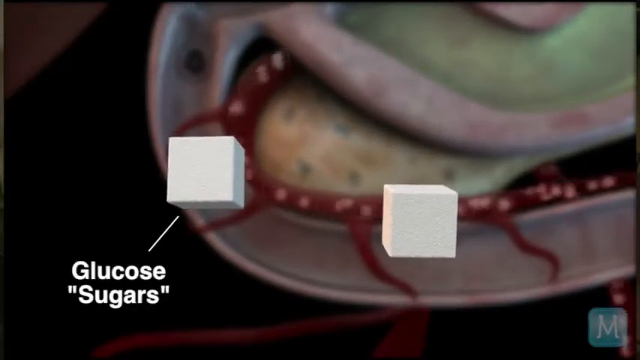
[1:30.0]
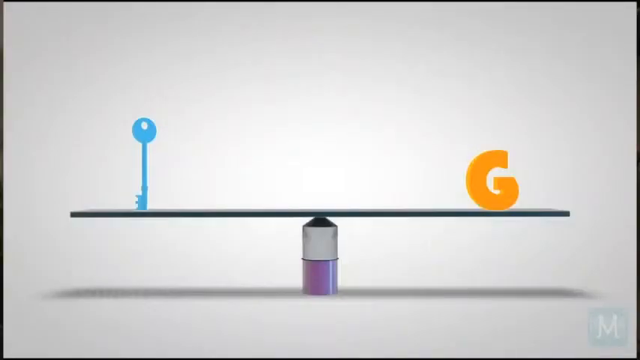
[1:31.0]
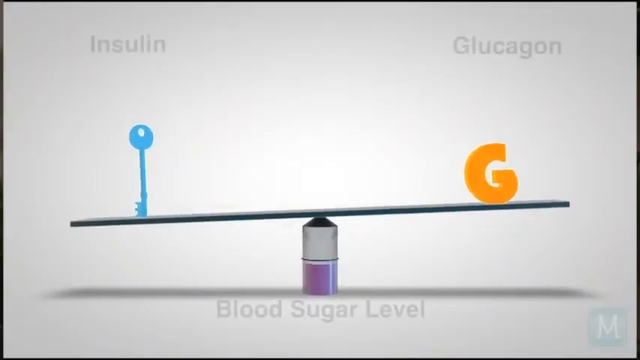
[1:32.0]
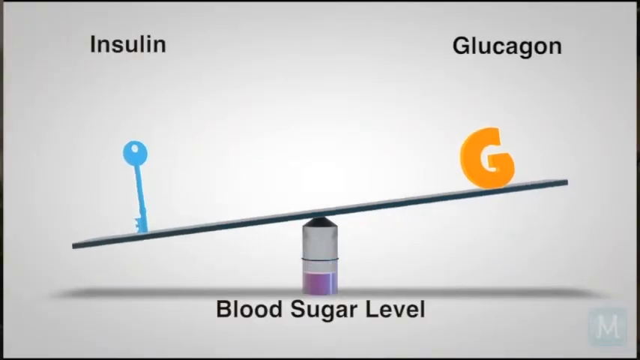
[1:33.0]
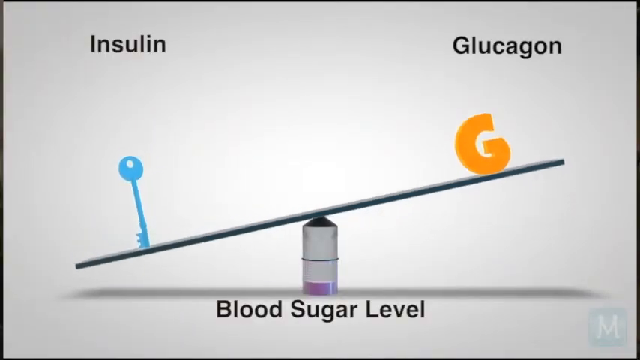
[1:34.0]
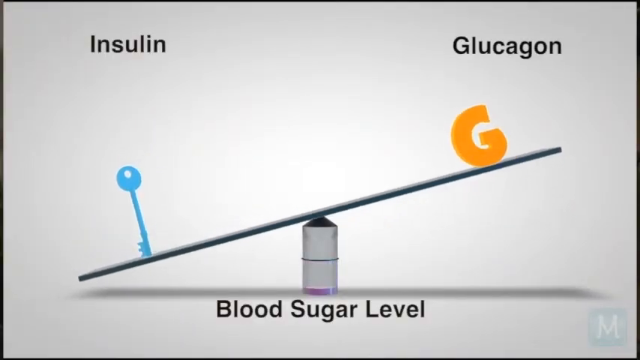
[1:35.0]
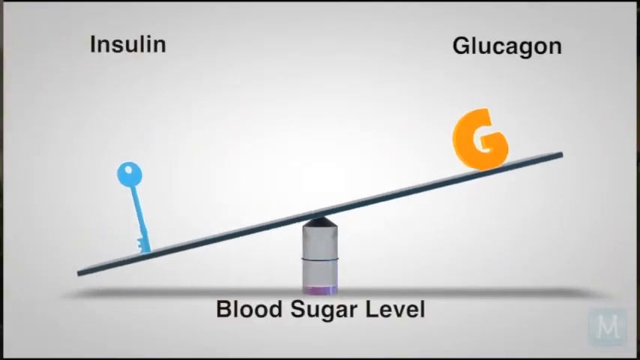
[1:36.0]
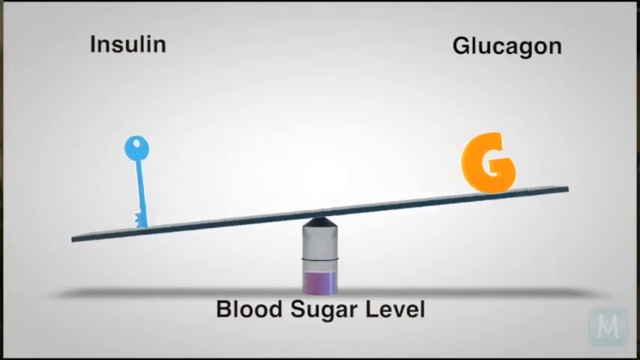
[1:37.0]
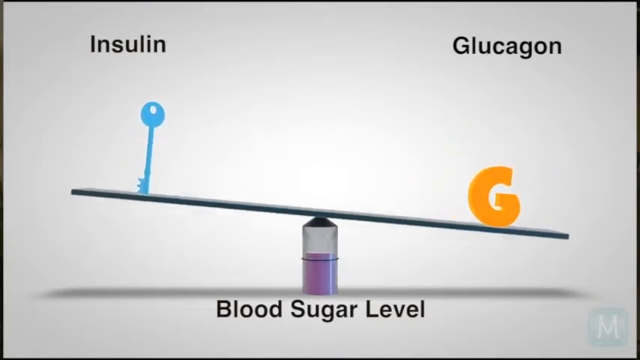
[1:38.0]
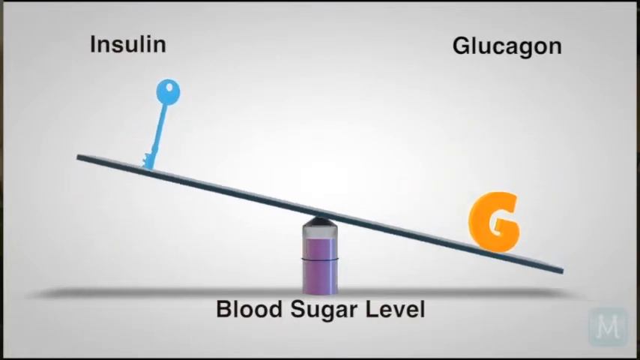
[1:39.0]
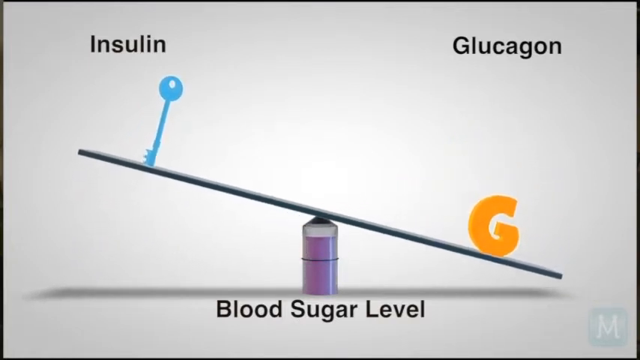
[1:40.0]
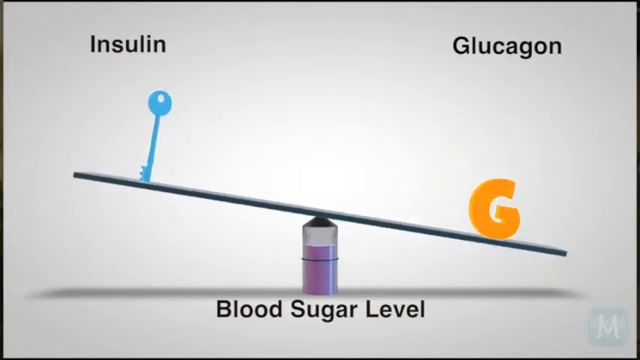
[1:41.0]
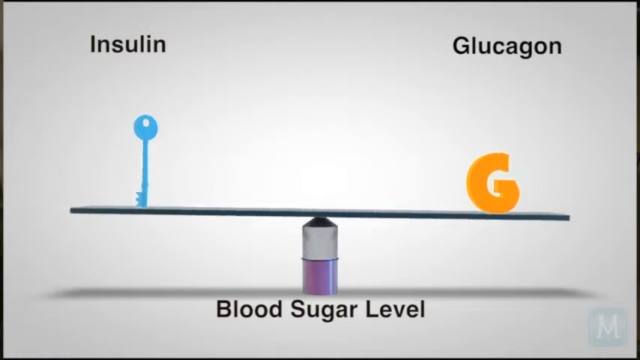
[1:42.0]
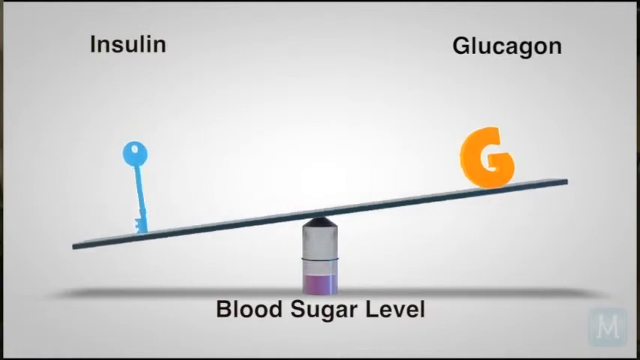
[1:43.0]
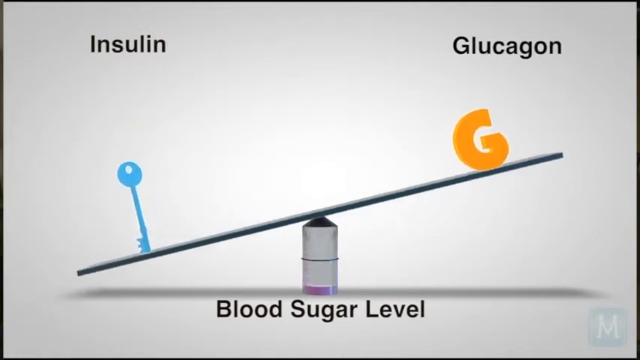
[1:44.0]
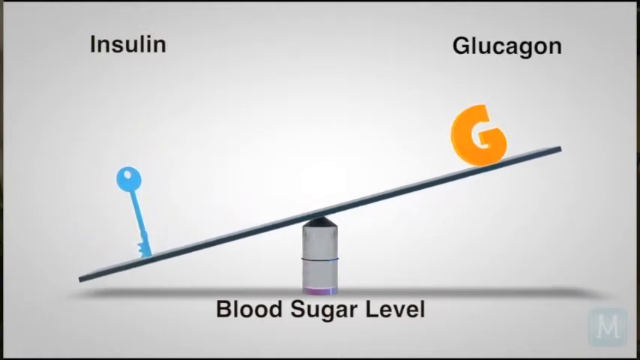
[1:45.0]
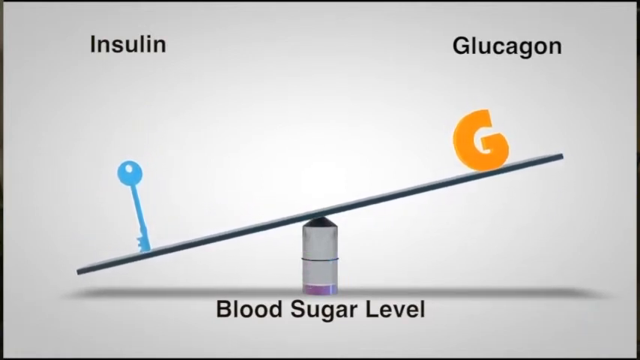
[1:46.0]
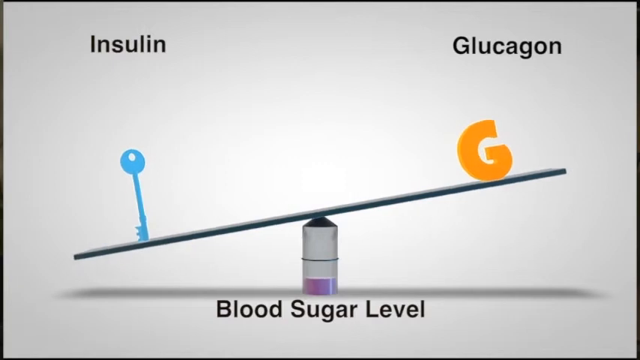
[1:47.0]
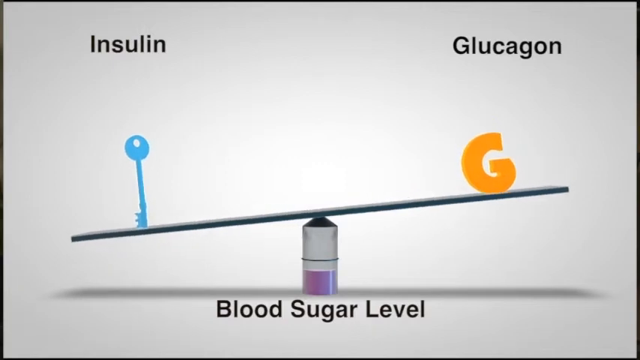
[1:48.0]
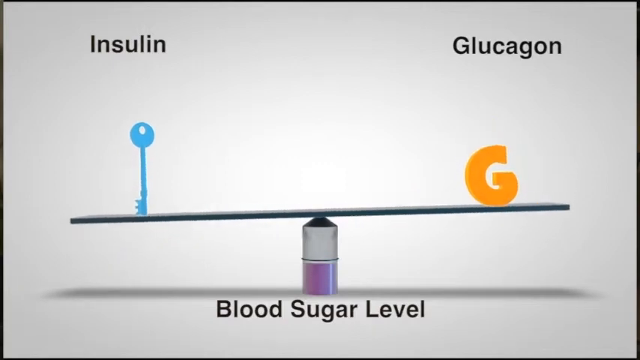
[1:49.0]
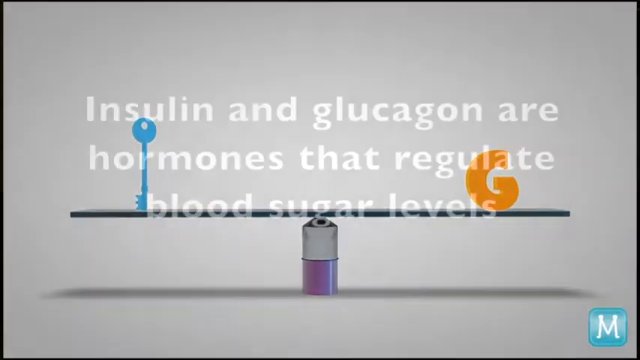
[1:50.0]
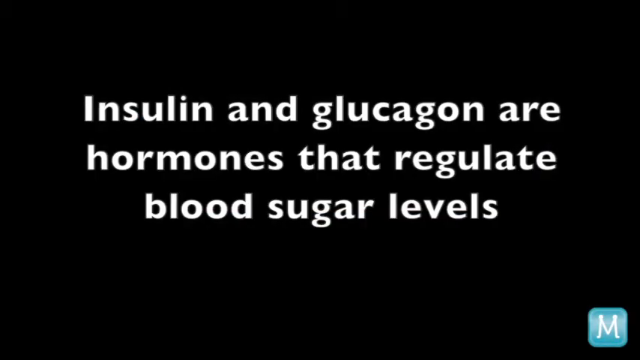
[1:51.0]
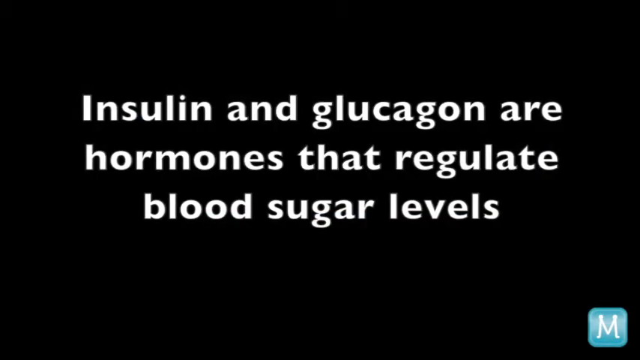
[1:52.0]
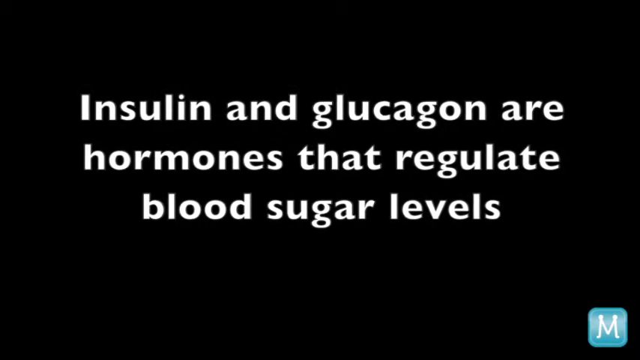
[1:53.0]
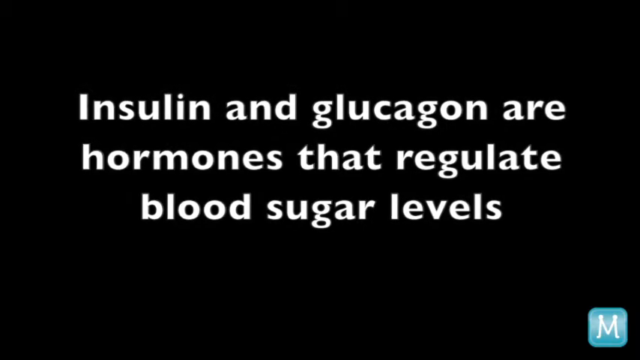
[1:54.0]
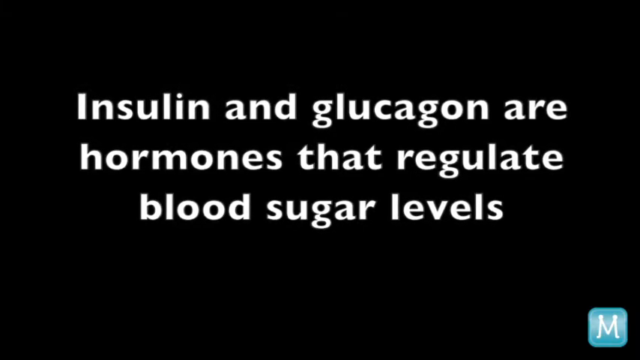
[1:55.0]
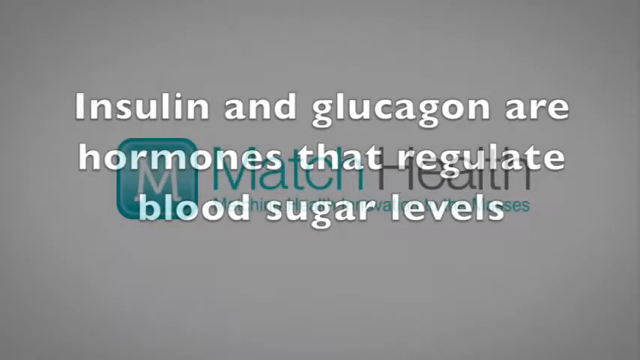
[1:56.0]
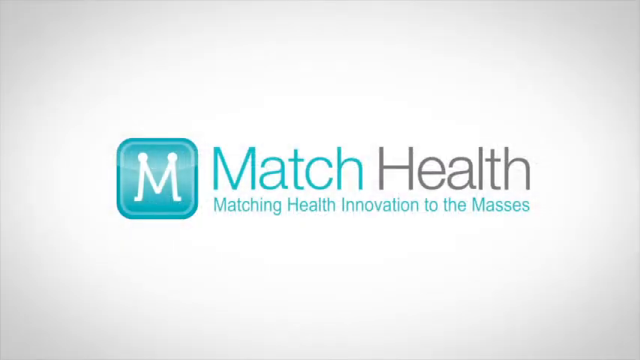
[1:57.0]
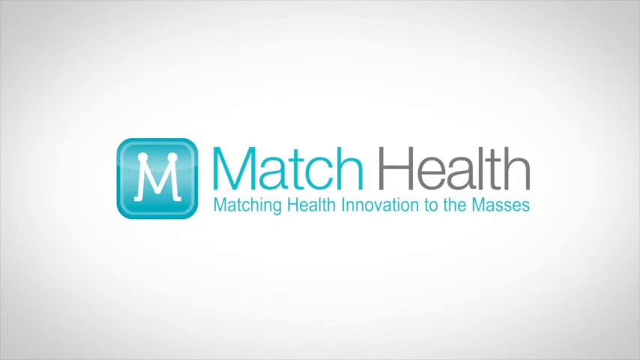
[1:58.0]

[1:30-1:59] Two white cubes are labeled glucose or sugars and move through the blood behind them. Then what looks like a scale appears, with a key on the left side labeled insulin and the letter G on the right side labeled glucagon; the middle, which balances it, is labeled blood sugar level. The scale moves back and forth and tips more toward the insulin side. A purple fluid inside the balance goes up and down as the scale moves left and right; the blood sugar level appears to go down when the scale tips to the insulin side and up when the insulin side moves up, when there looks to be less glucagon. Text then reads "insulin and glucagon are hormones that regulate blood sugar levels."